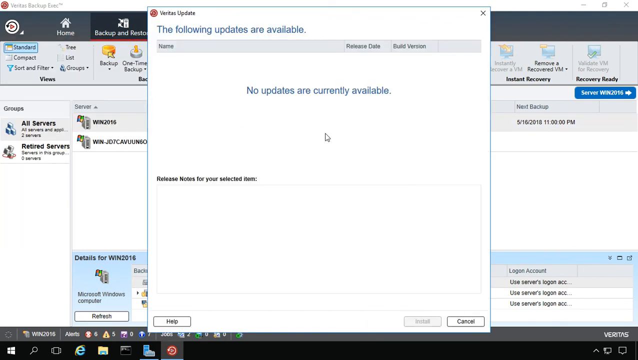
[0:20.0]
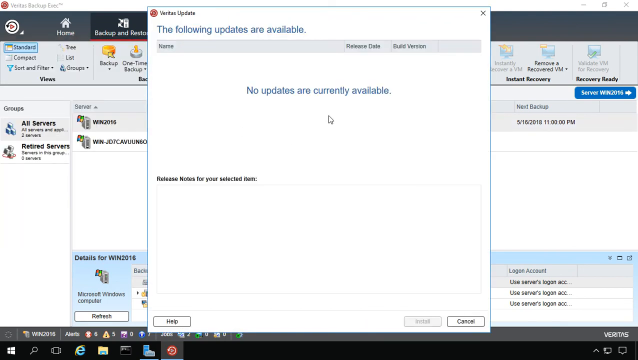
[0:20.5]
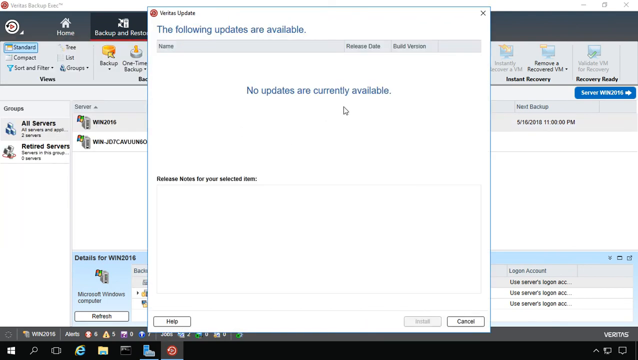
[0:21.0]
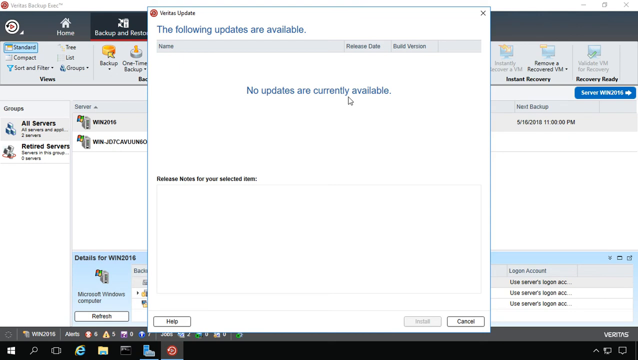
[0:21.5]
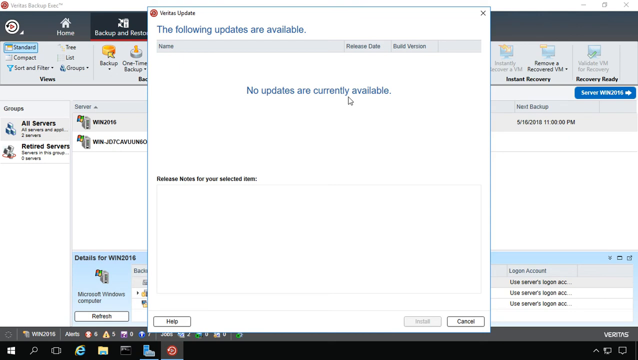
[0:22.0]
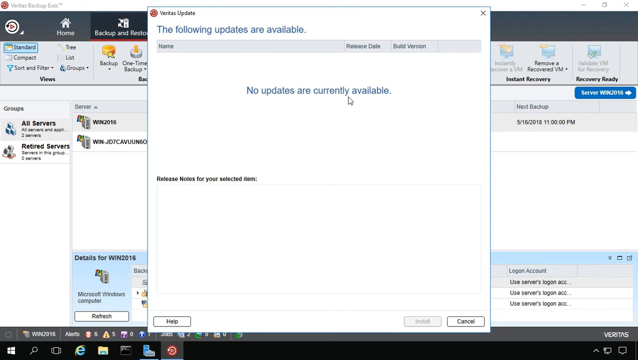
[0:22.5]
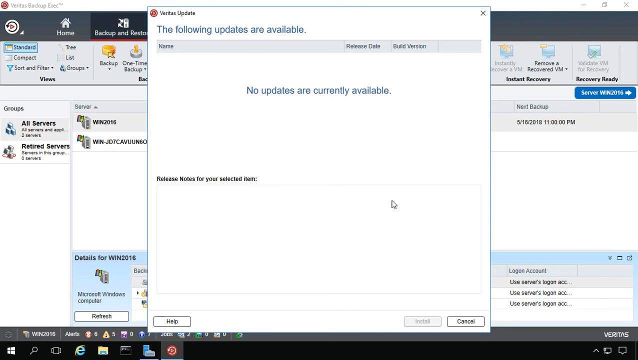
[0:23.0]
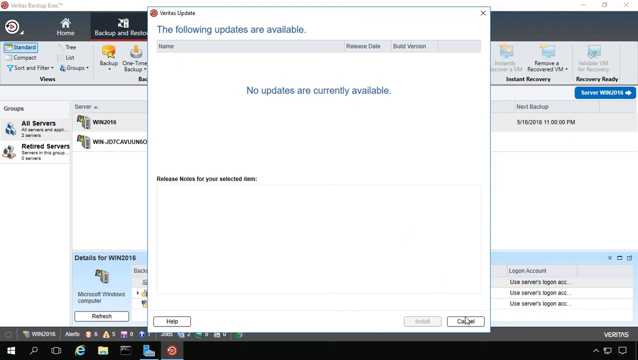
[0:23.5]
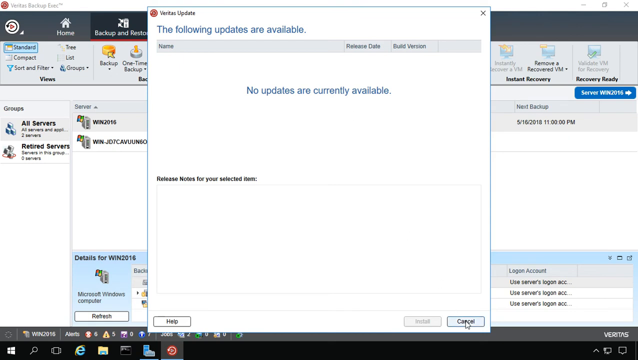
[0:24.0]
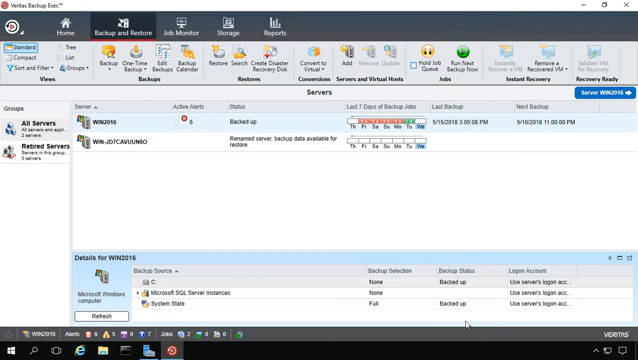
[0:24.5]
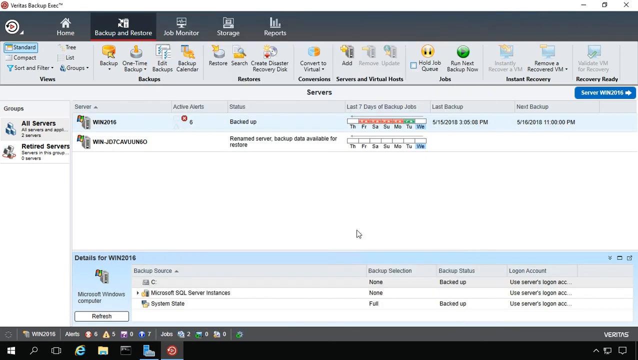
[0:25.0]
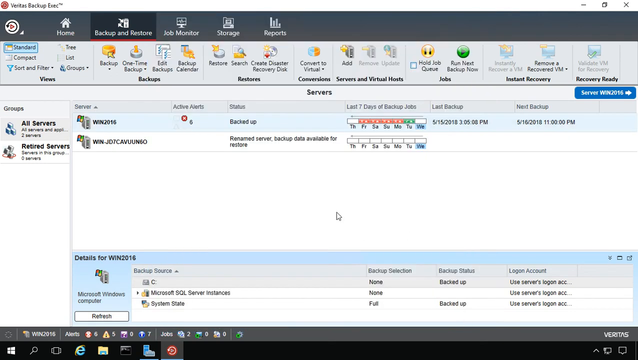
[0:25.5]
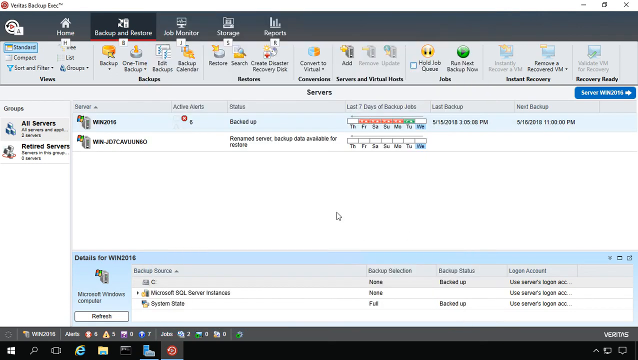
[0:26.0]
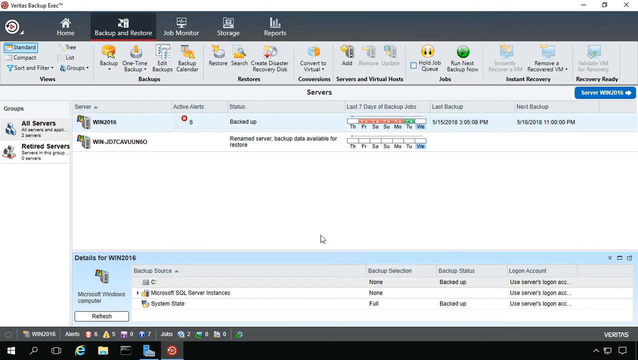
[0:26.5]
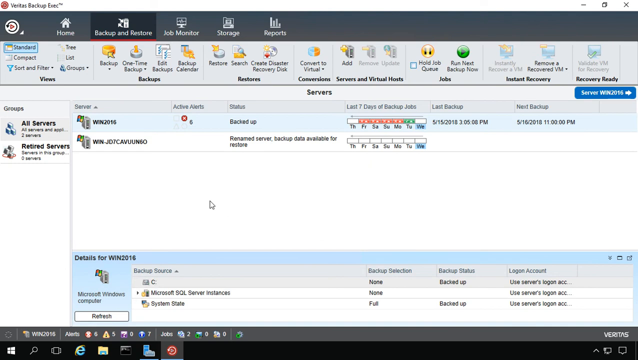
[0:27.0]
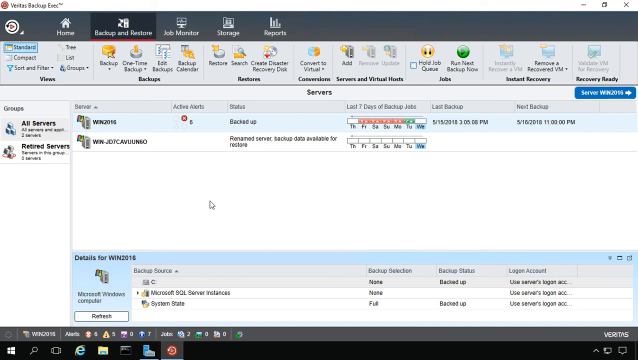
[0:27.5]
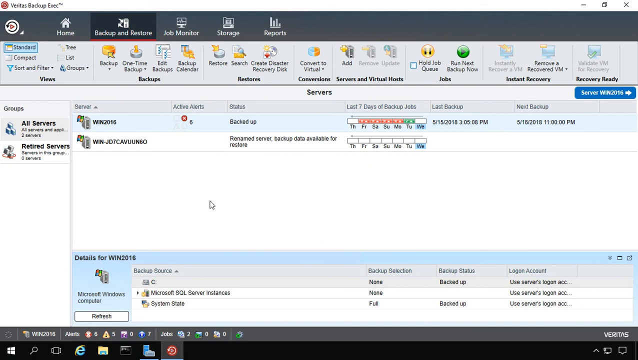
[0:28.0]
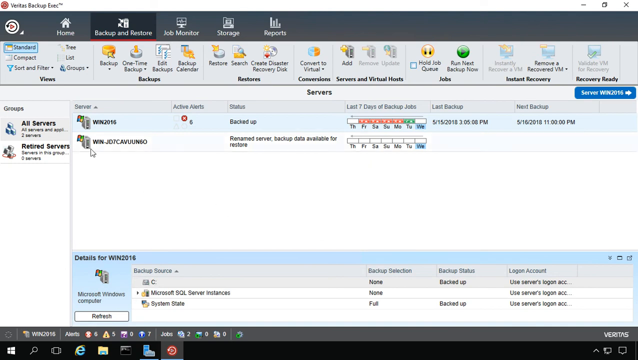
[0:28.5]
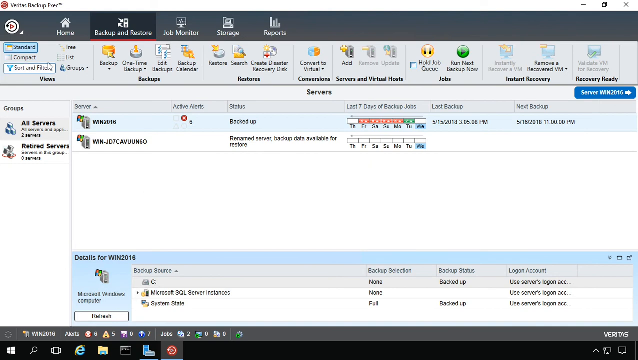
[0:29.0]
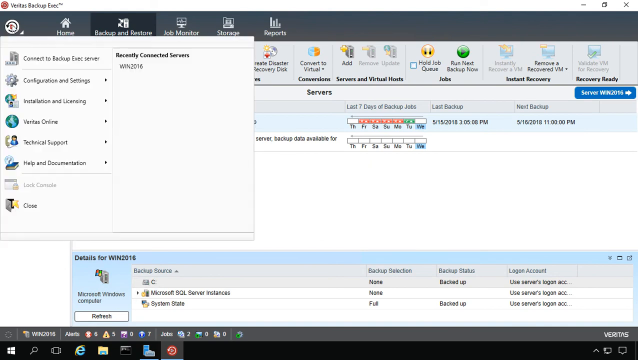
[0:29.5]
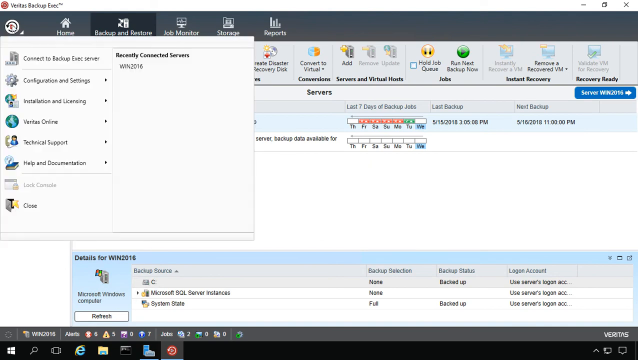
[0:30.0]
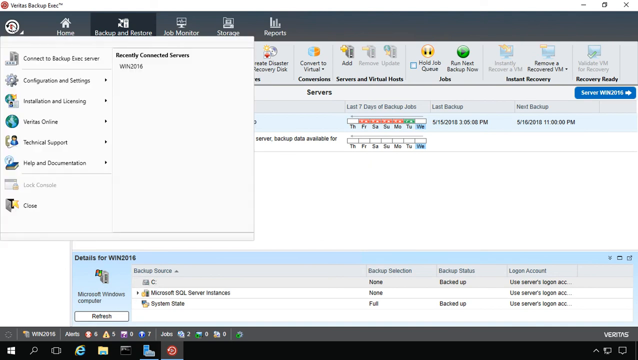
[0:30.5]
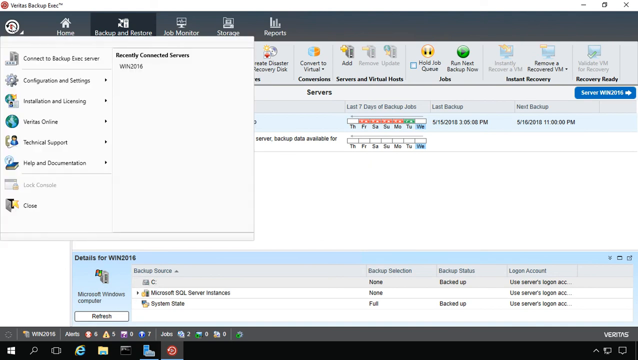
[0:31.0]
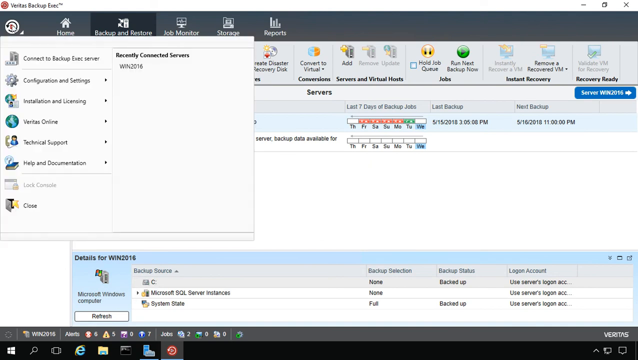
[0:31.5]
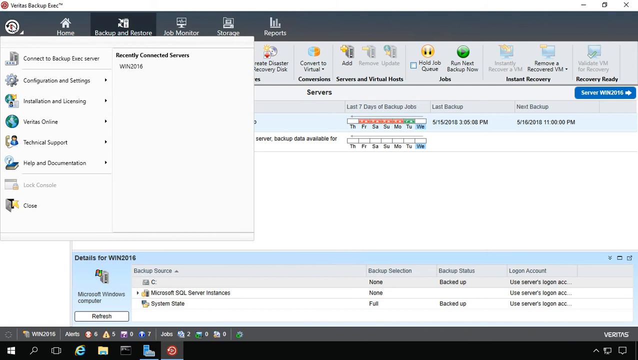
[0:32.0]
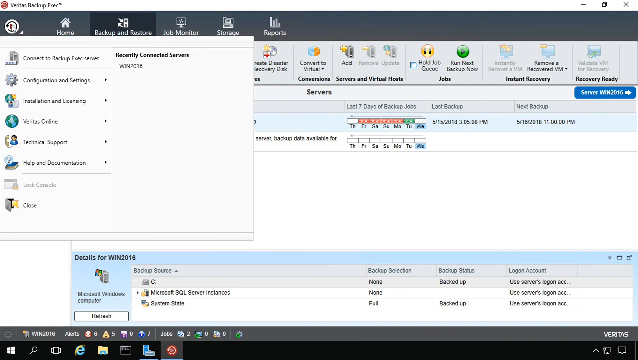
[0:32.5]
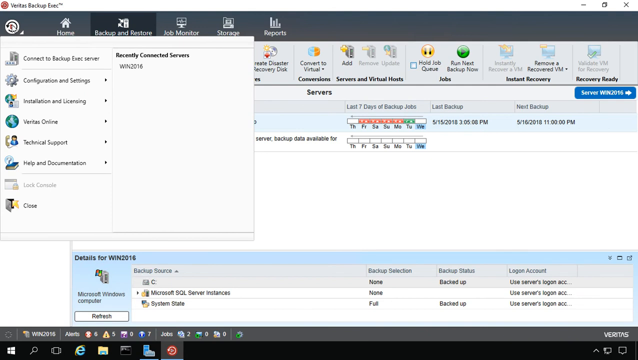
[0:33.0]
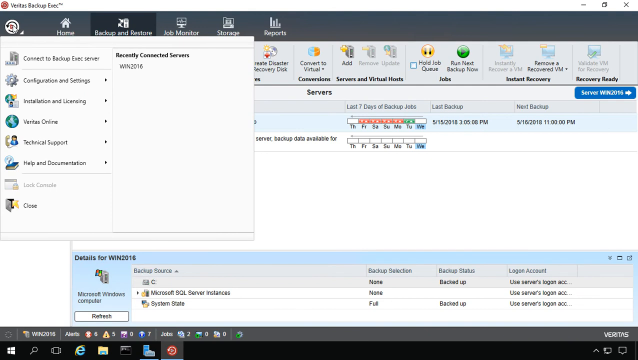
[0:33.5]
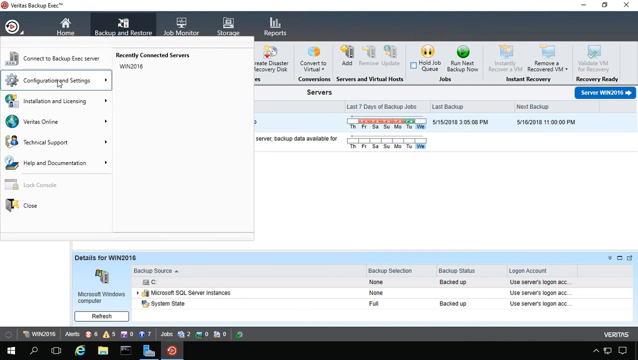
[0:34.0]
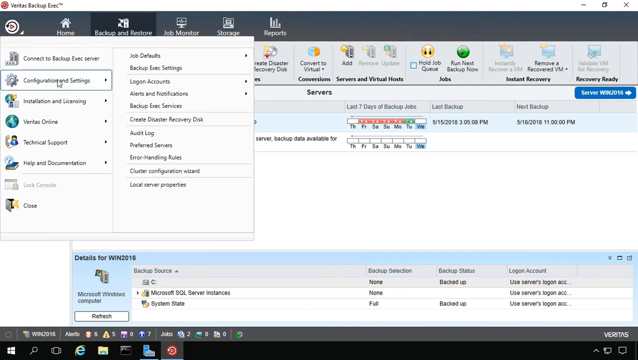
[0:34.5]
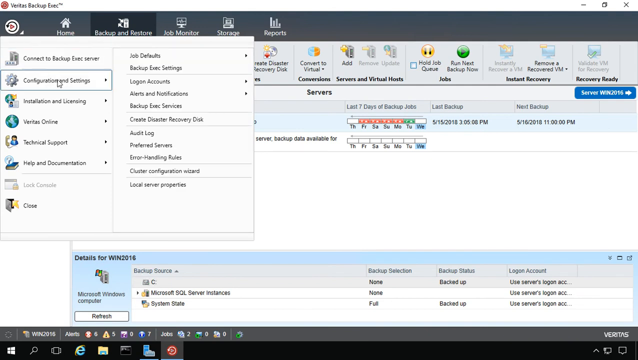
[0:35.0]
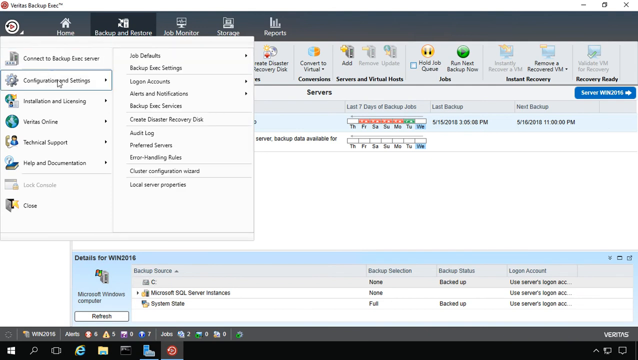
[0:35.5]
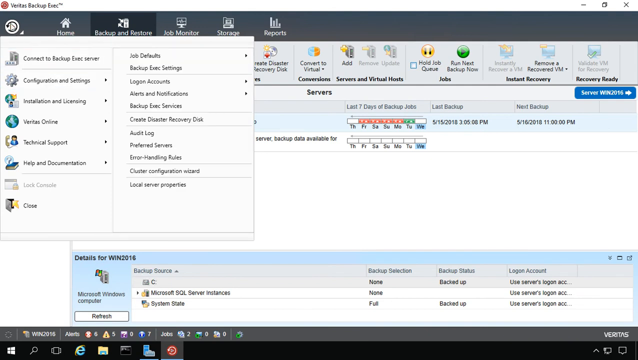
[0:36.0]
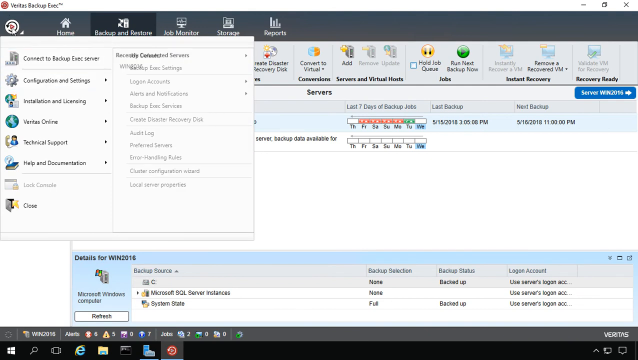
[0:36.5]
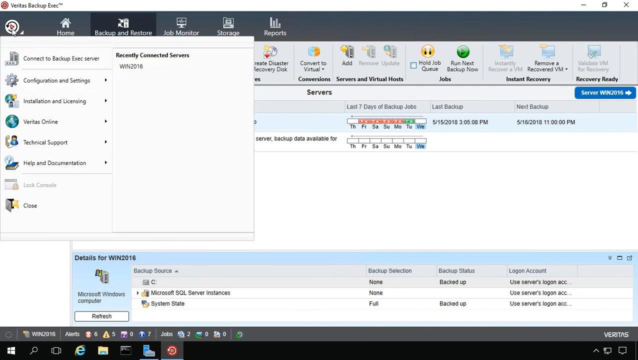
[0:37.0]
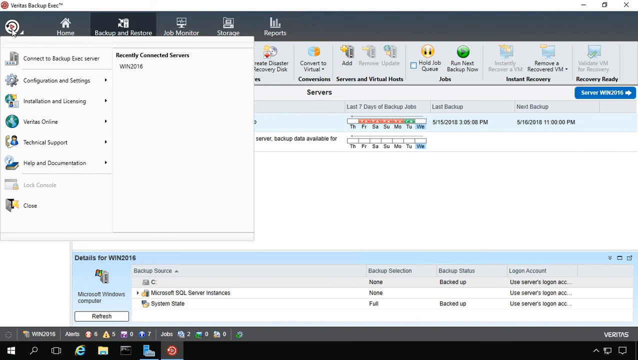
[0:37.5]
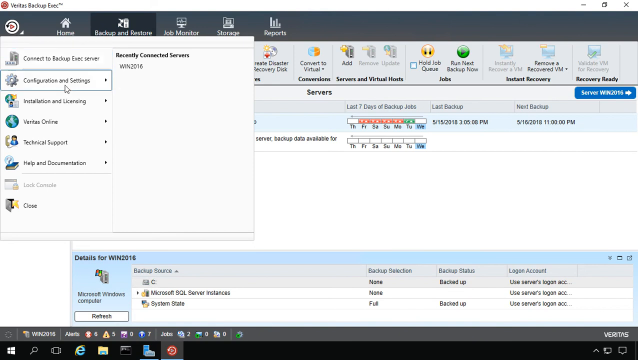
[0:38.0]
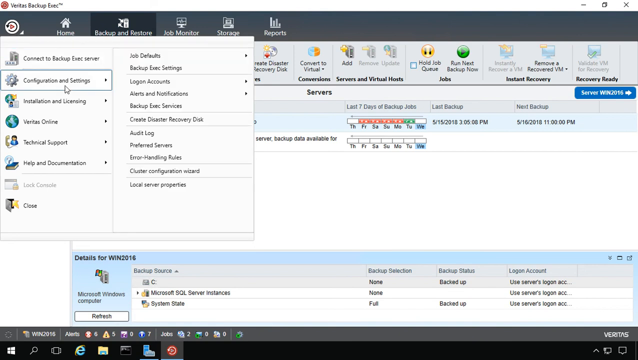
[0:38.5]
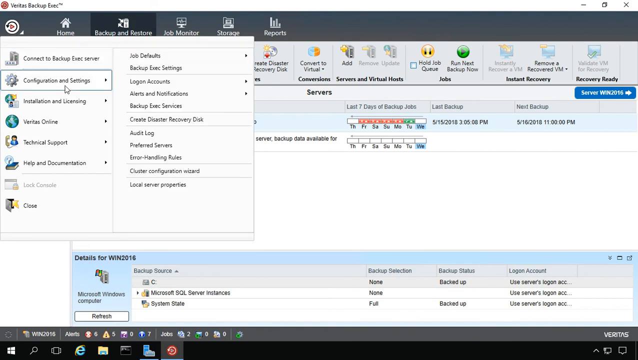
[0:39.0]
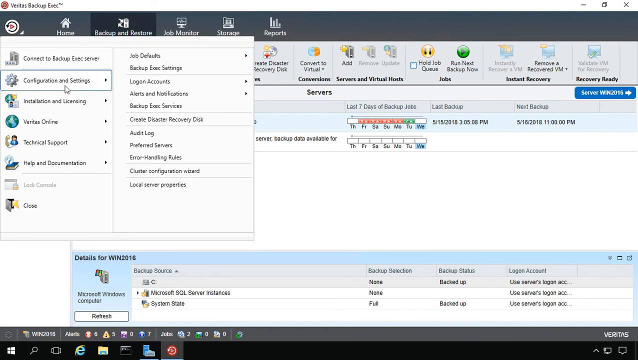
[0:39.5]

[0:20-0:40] The update option is shown, indicating that there are no updates currently available. The person operating the computer then moves down the window and shows the original screen, with the backups and servers visible in the background. Below are the backup sources, along with icons for warnings, errors and other items. Reports appear on the upper part of the screen, along with groups. The video then moves to the configuration section and settings, where logon accounts, alerts, notifications, an audit log and preferred servers are listed. The server that is connected is displayed, along with many options such as server properties.